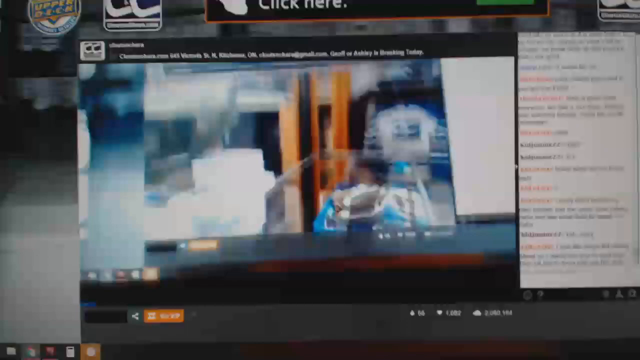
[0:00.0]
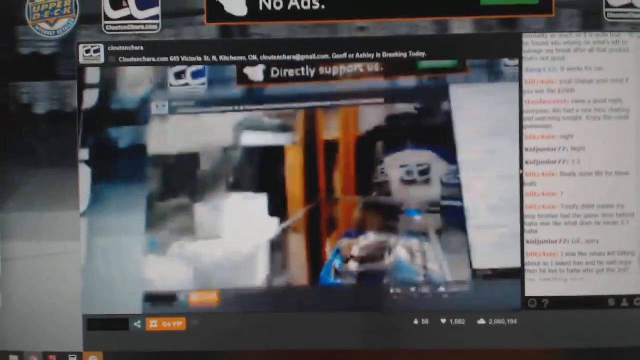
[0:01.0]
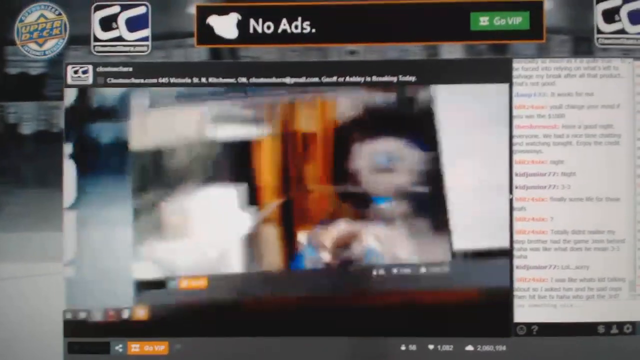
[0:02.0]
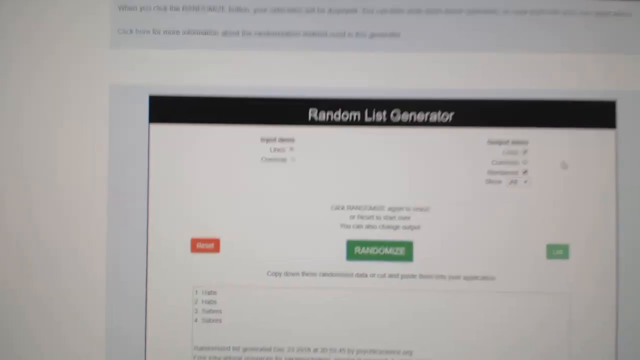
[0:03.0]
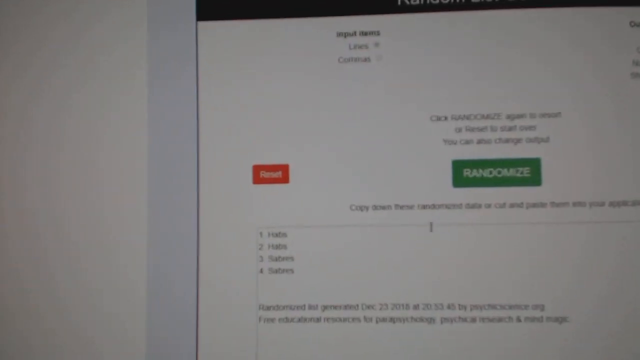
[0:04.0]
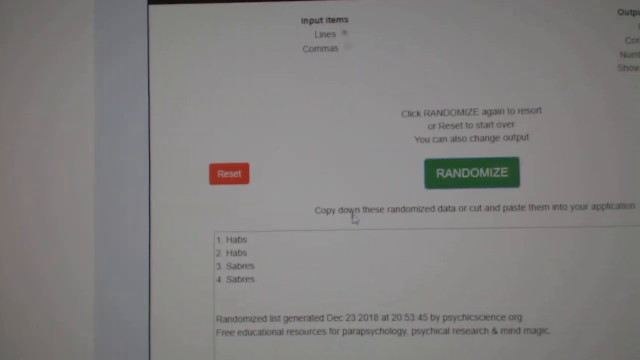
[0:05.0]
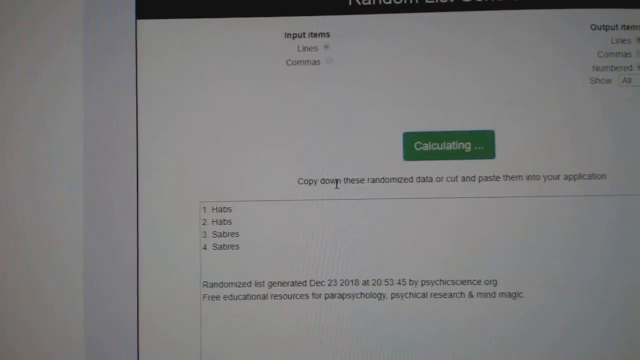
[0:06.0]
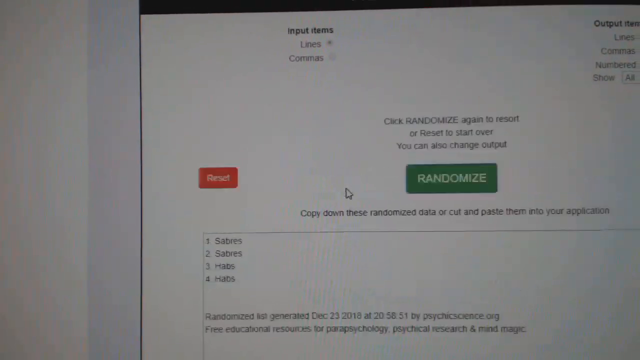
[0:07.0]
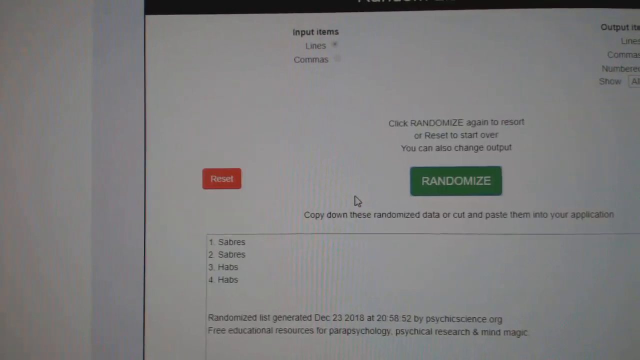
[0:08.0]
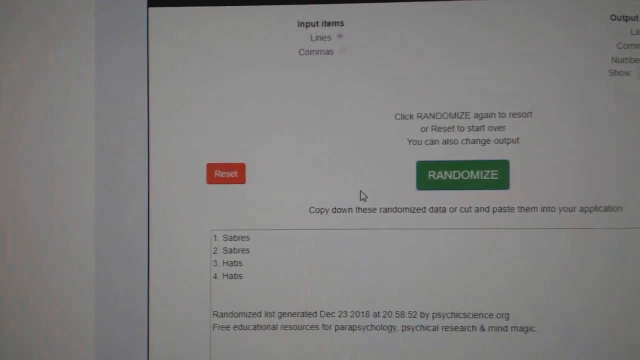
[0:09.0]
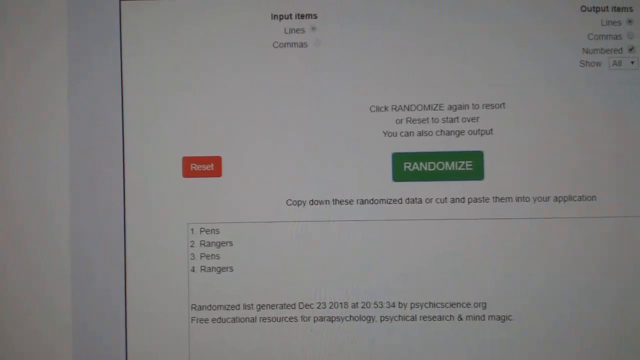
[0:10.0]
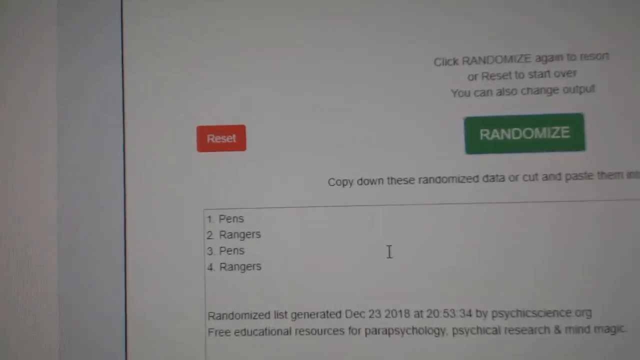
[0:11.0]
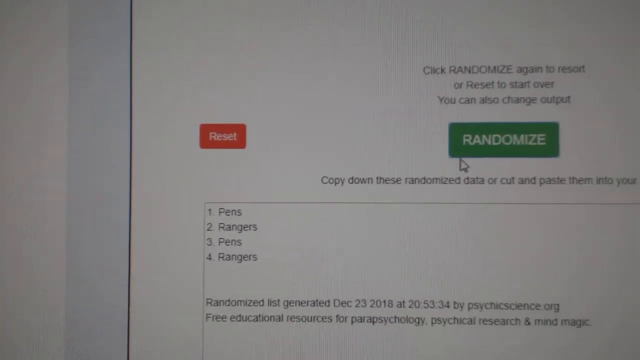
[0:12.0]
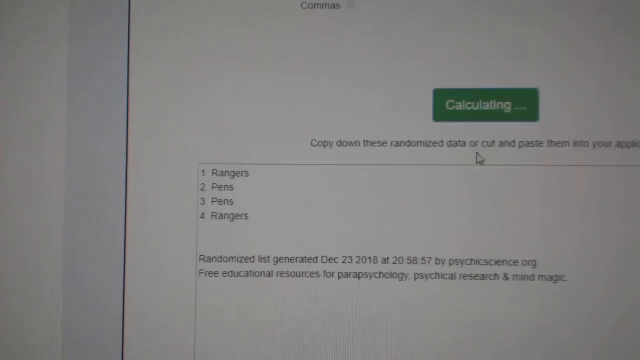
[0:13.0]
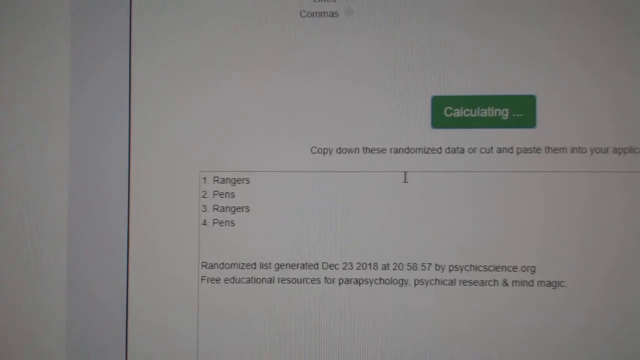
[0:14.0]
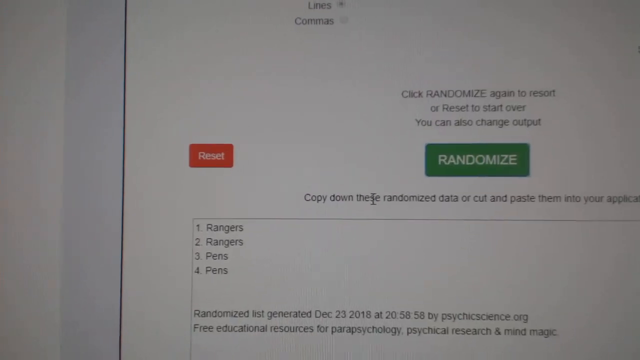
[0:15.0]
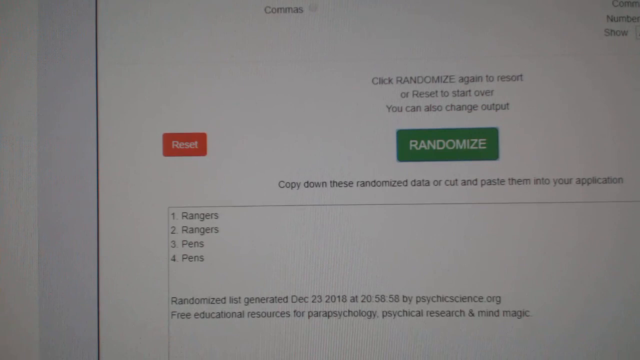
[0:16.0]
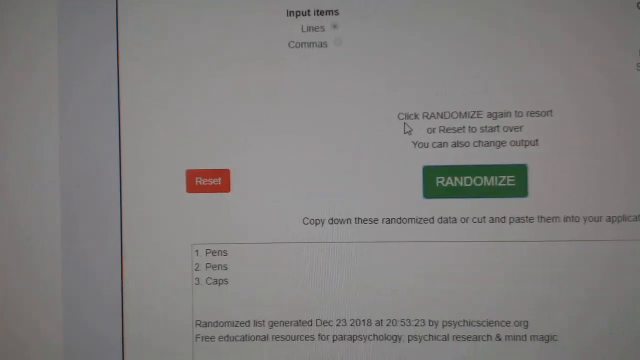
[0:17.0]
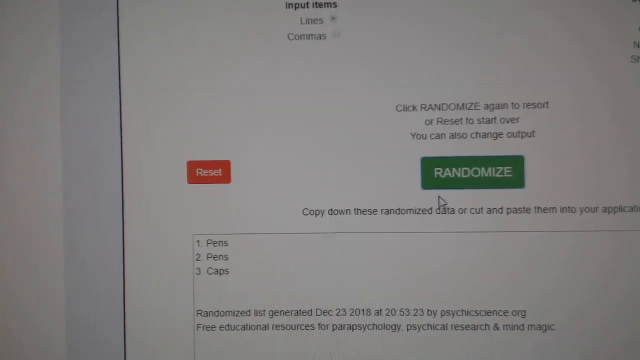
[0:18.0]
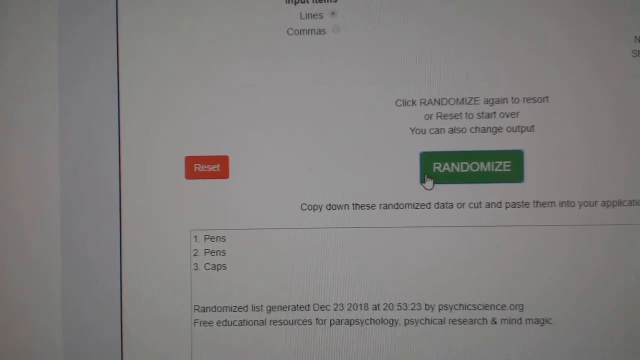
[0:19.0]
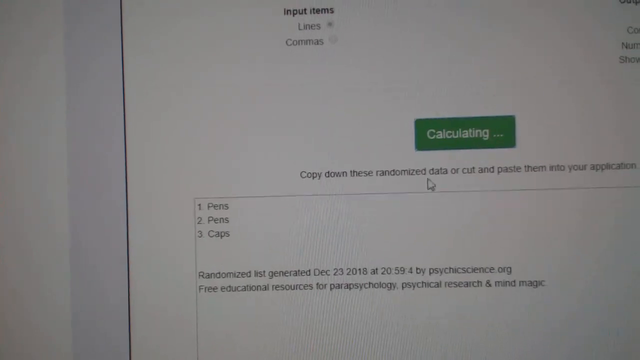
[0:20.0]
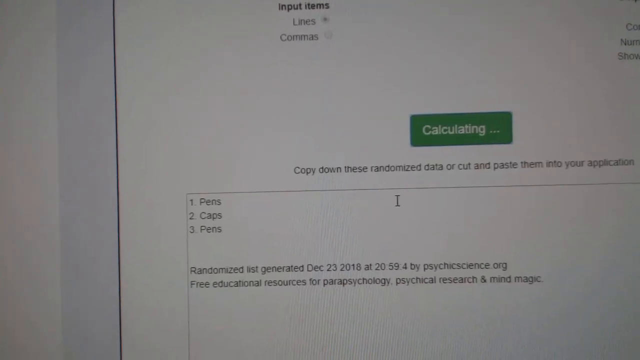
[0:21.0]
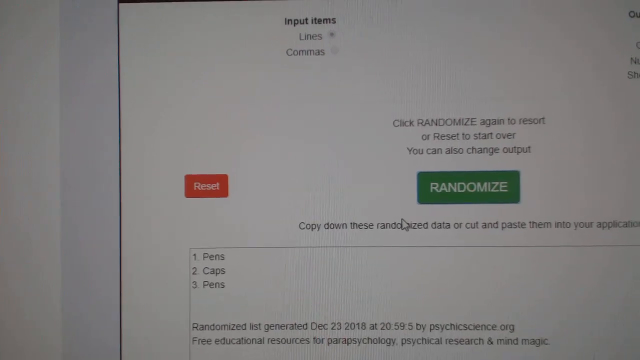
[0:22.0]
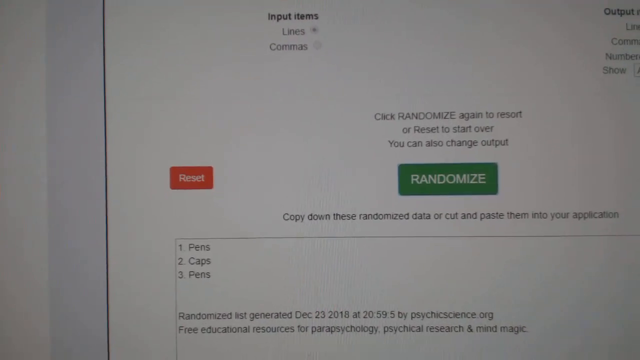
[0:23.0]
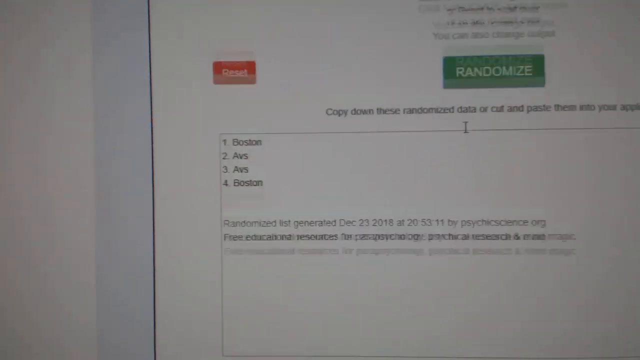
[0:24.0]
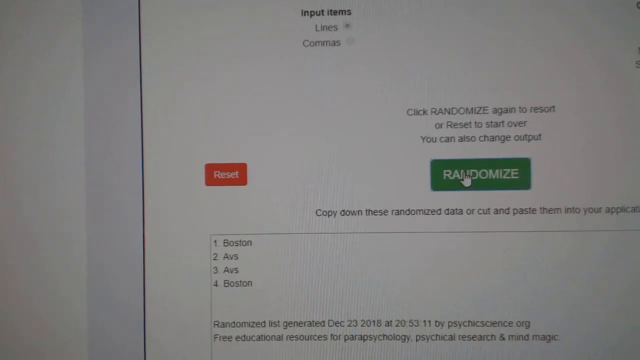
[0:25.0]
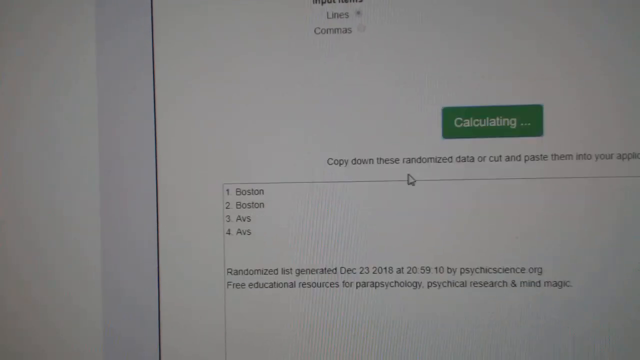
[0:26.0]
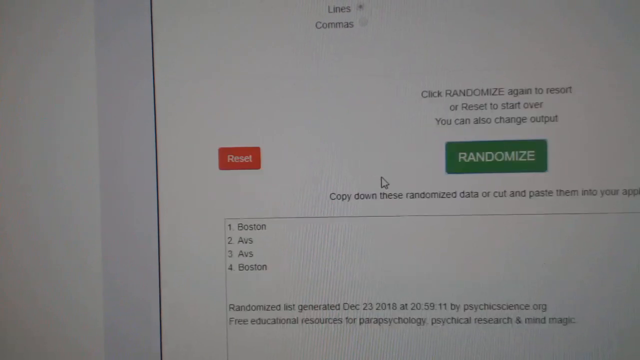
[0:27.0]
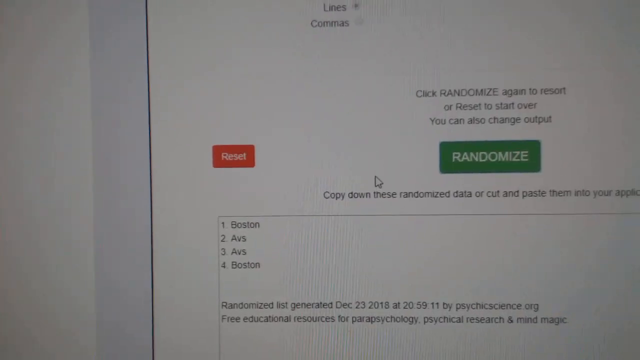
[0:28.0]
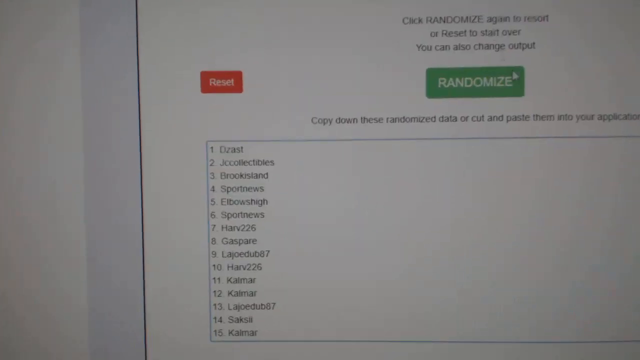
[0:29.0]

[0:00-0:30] The footage is very grainy and blurry, making it hard to tell what is going on. A website is on screen, with what seems to be a chat box on the right-hand side, though the names and text in it are too blurry to make out. At the top is a sign reading "no ads" in a black rectangular box. A logo in the upper left-hand side reads "upper deck", and another sign has "CC" on it. Some footage plays, then it cuts to a page reading "random list generator" with a button that says "randomize". The page then says "calculating" as the mouse keeps jumping around and clicking randomize. The view keeps zooming in and out; someone is filming the computer screen with a camera rather than screen recording it. They repeatedly click randomize, and the page shows calculating each time; after every click the cursor moves away from the button and then back to click it again. What is being generated is not clear.